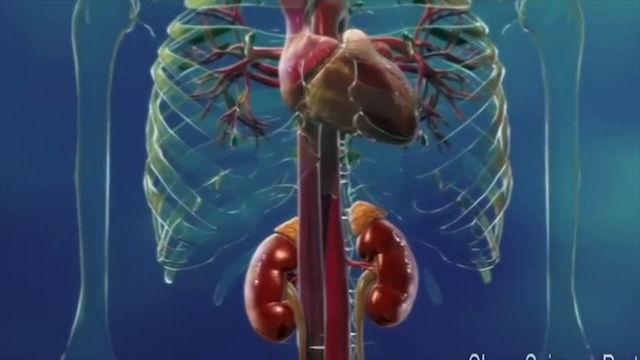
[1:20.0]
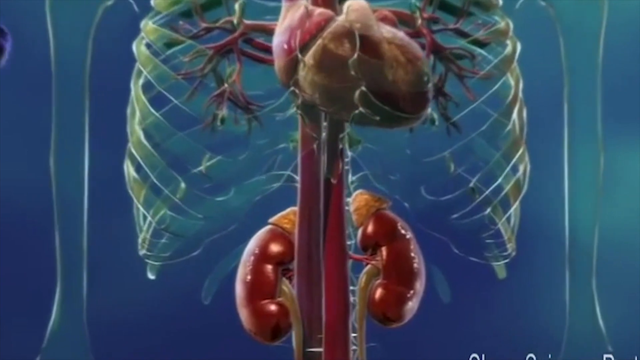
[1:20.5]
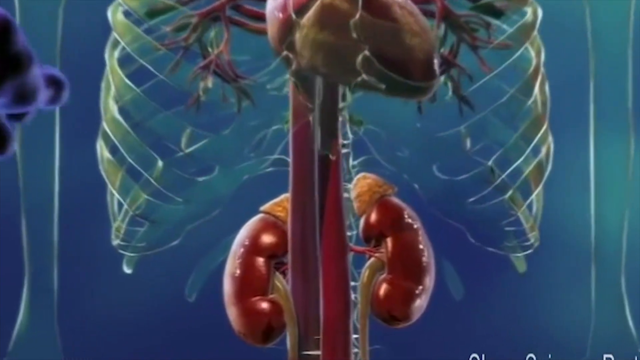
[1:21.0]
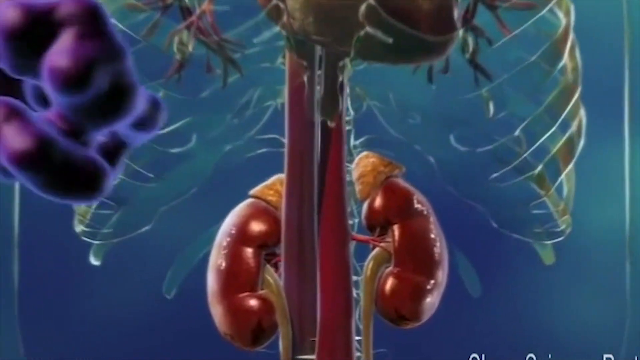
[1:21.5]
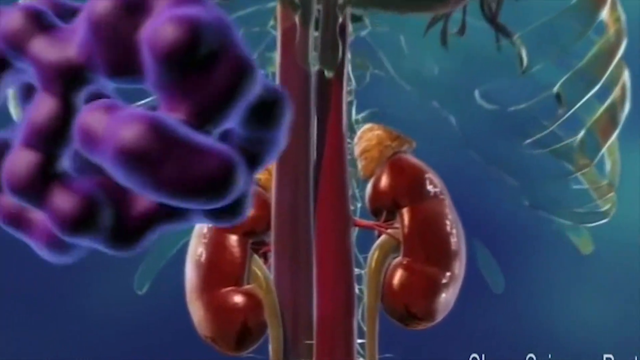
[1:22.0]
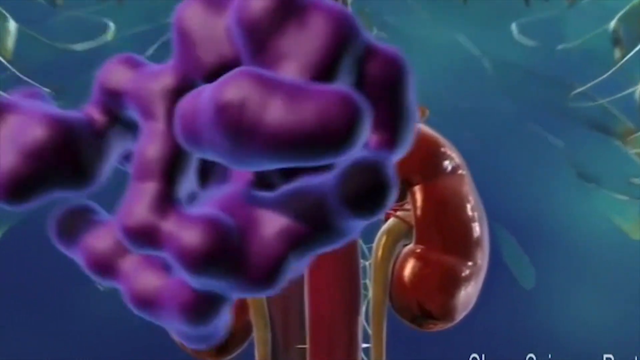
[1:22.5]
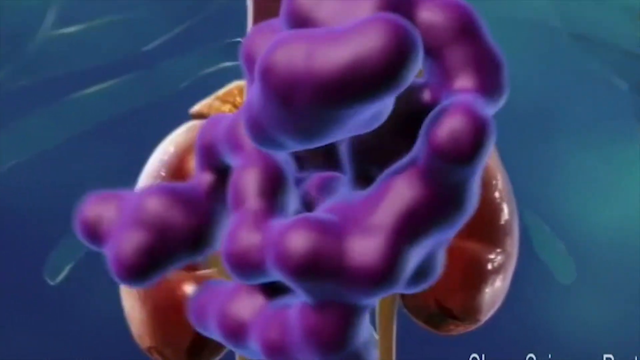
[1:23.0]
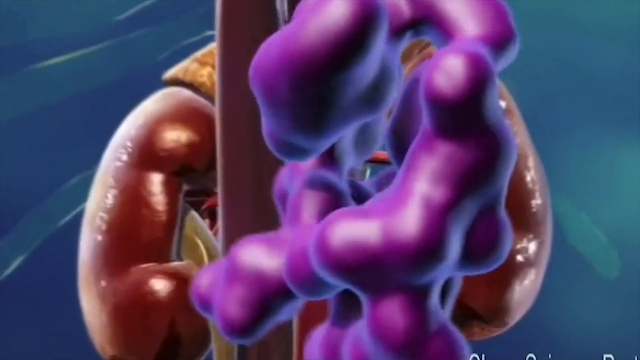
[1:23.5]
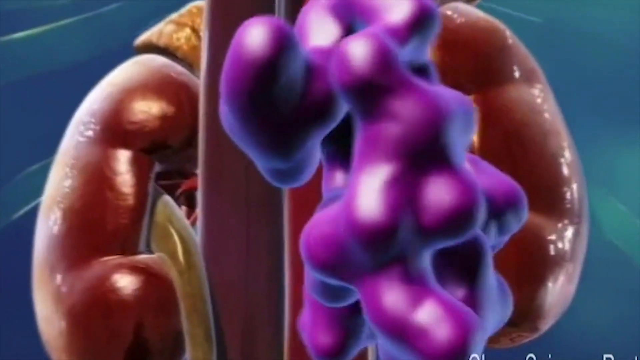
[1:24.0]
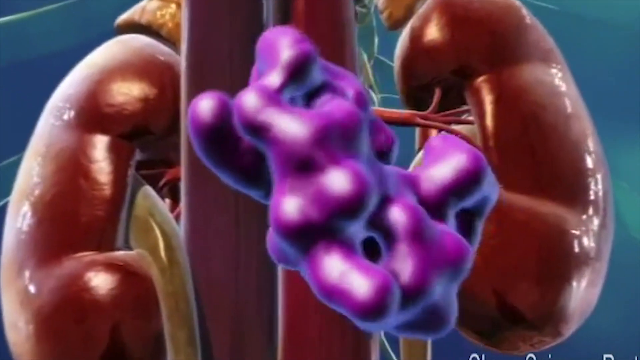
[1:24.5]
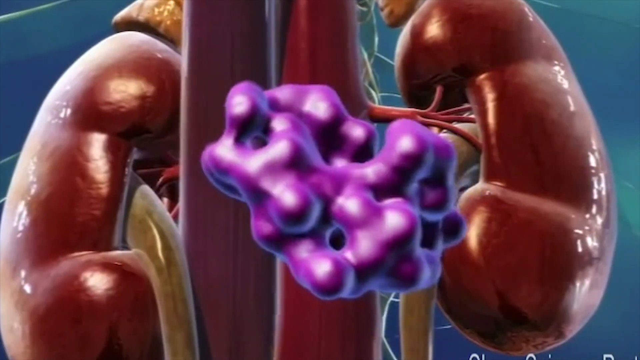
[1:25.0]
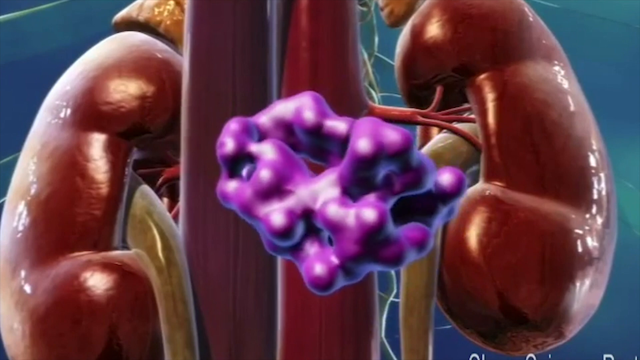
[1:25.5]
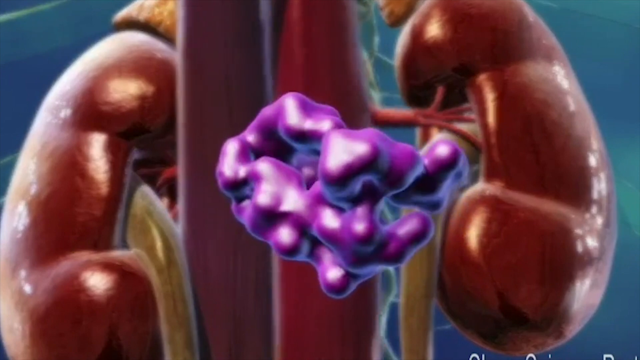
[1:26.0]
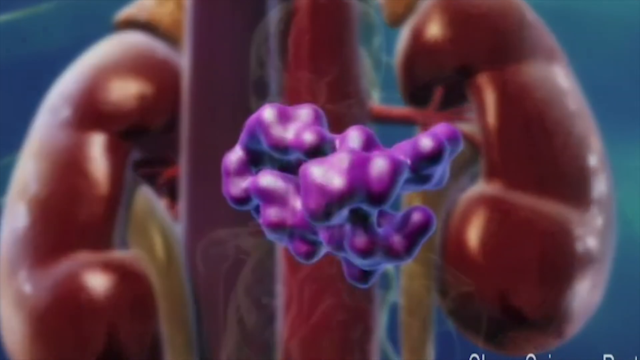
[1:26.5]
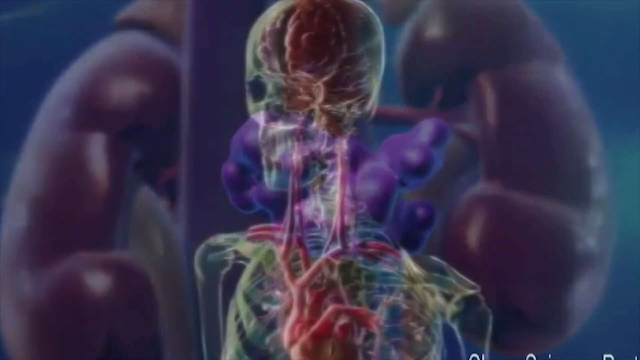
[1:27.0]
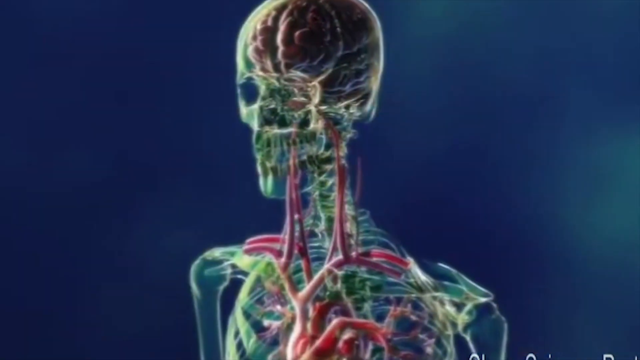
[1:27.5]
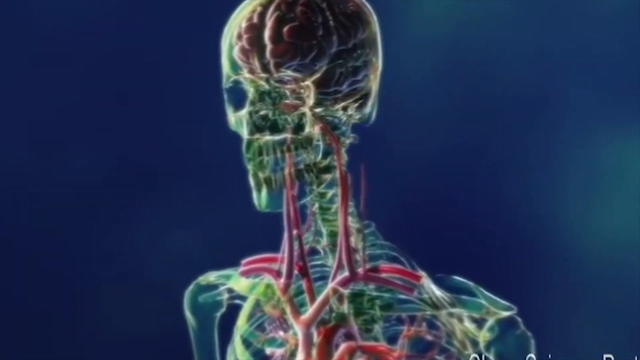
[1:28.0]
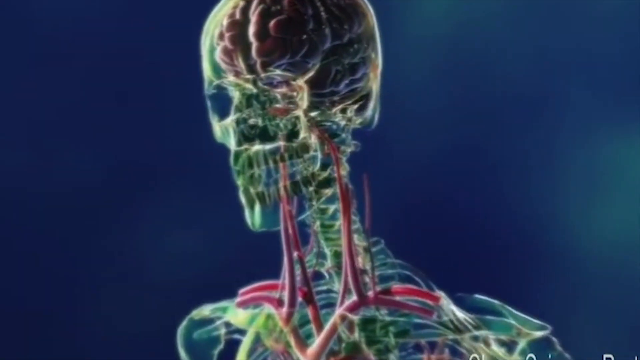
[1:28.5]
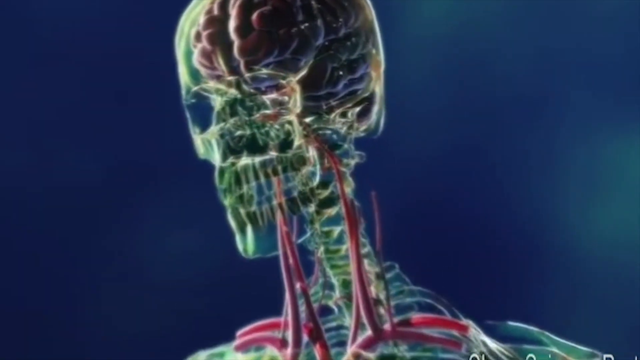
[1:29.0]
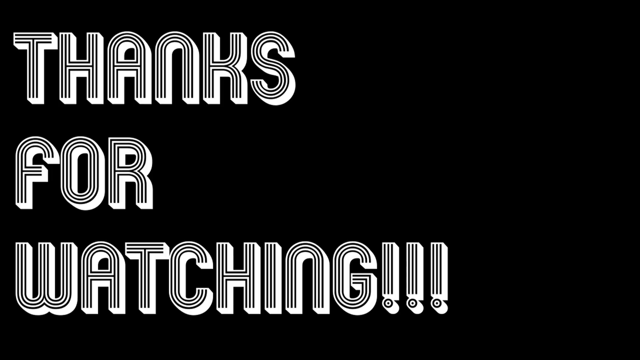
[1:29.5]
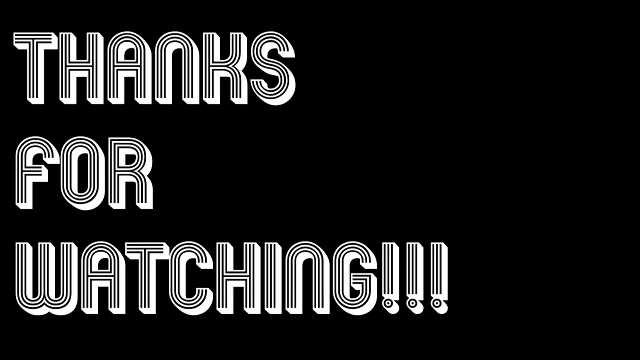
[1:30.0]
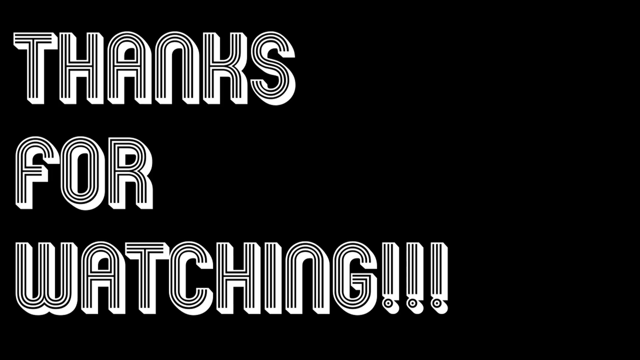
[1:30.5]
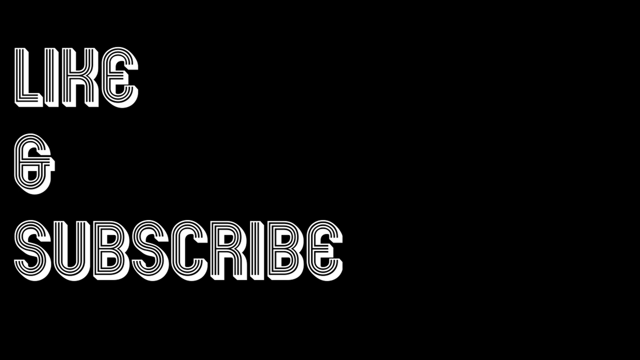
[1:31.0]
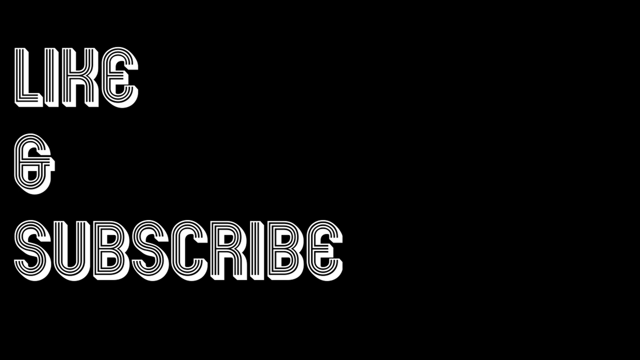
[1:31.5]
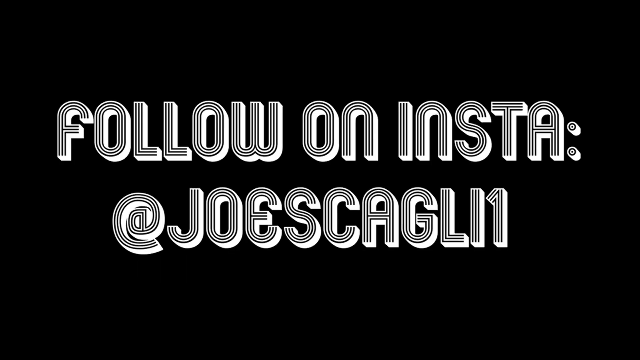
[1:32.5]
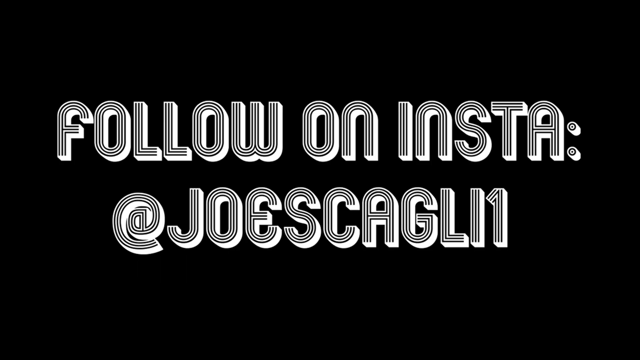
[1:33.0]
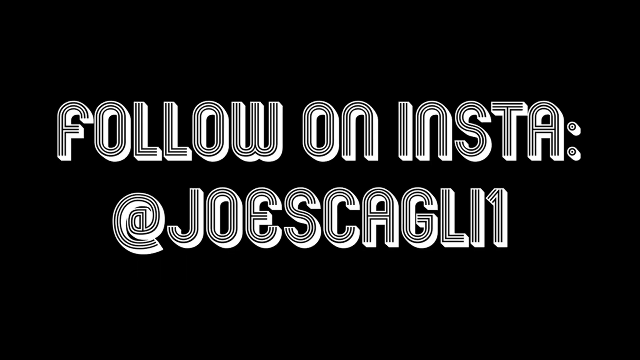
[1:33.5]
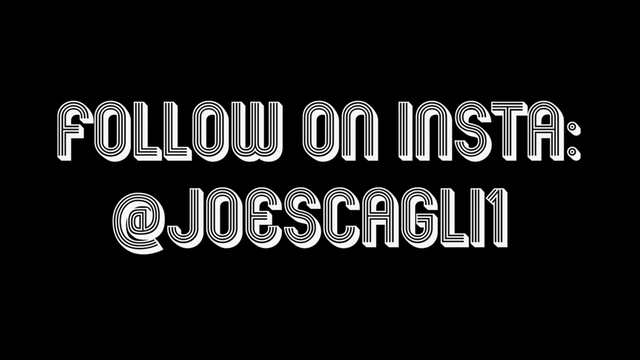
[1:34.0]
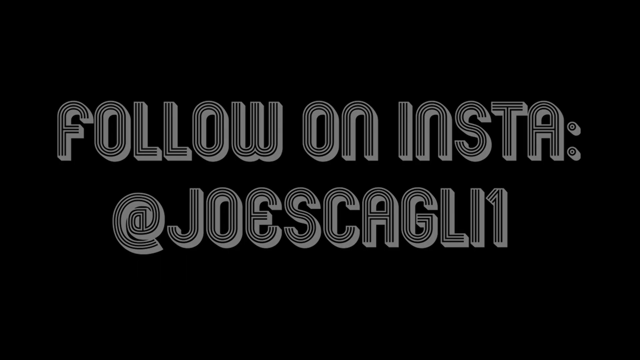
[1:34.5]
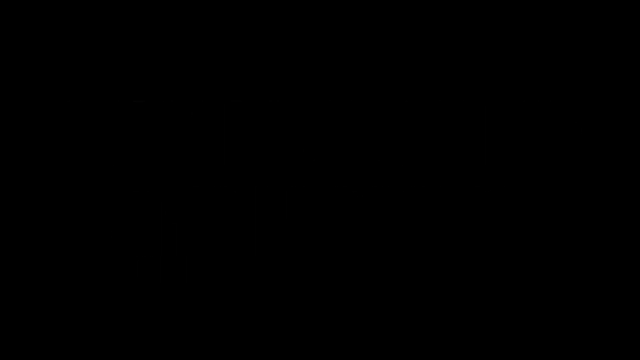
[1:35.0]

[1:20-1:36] The video cuts from a simple side drawing of a brain to a 3D model of someone's internal skeleton and organs, zooming in quickly toward the internal organs. At the top the heart is beating, and various tubes pulsate with the beats. A mass of purple comes from outside the body and heads toward the various tubes leaving the heart. The view then transitions to a different angle showing the skull and tubes heading toward the brain, which are also pulsating. The shot zooms in slowly, then cuts to a black background with text that reads "thanks for watching." It transitions to a new slide that reads "like and subscribe," and then a new screen appears reading "follow on Insta at Joe S. Cagley 1." The text very slowly fades out, leaving a blank black screen for a few seconds.